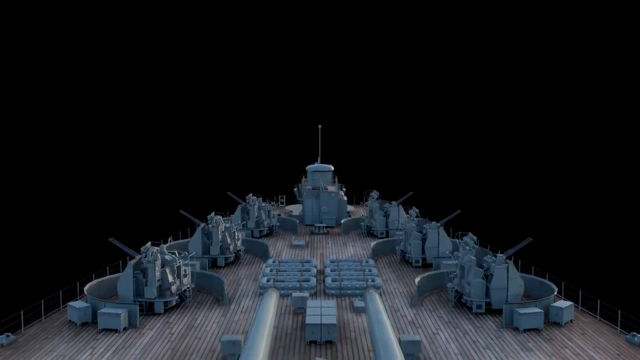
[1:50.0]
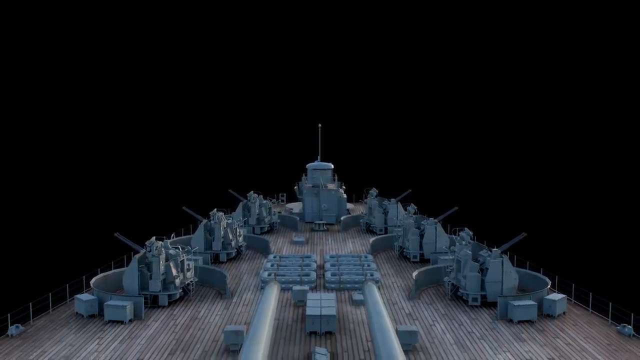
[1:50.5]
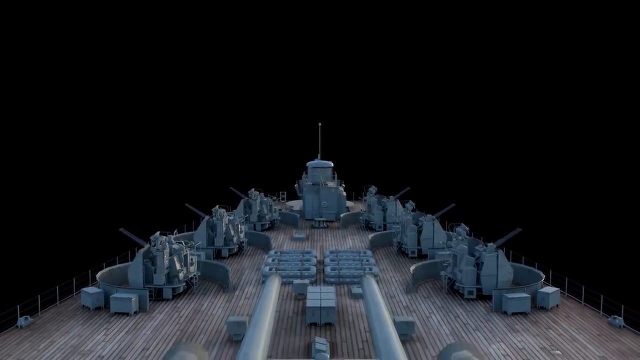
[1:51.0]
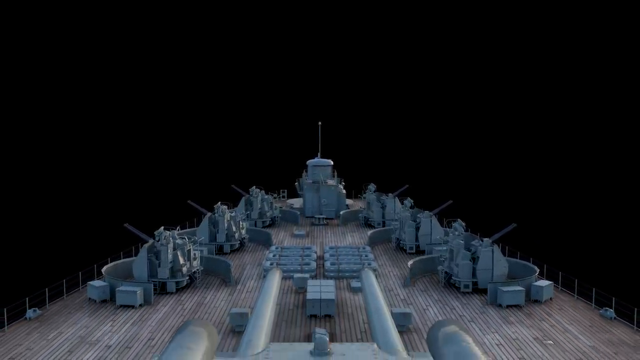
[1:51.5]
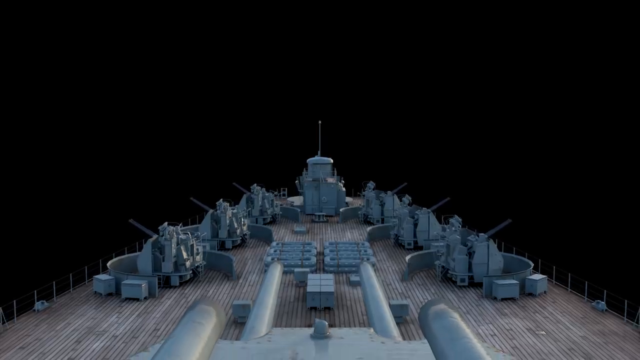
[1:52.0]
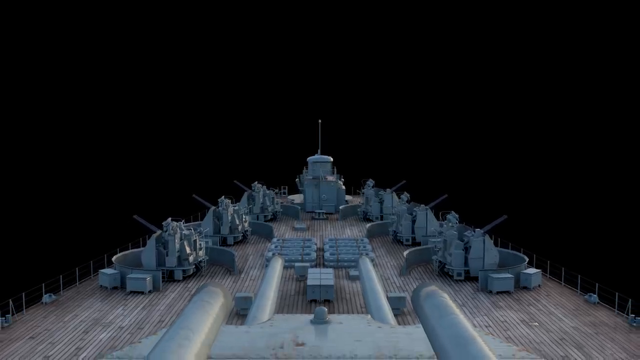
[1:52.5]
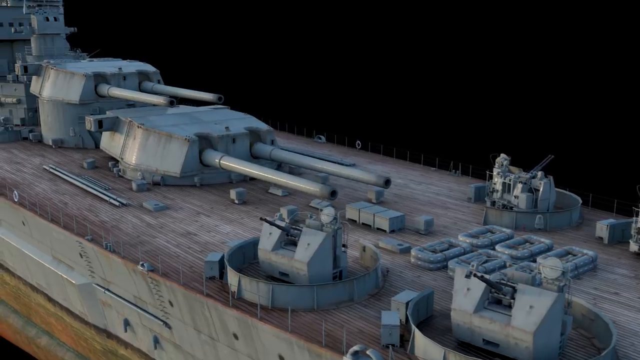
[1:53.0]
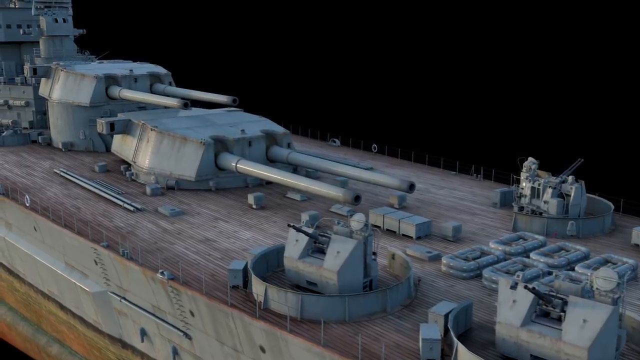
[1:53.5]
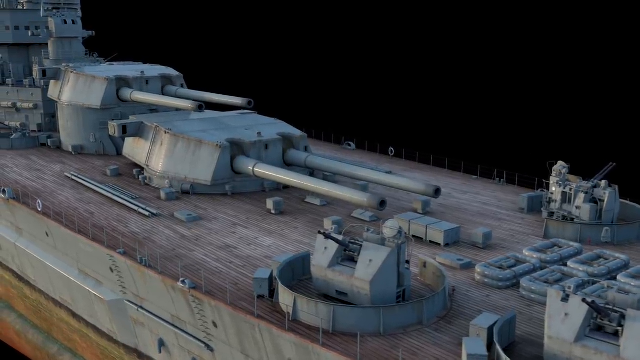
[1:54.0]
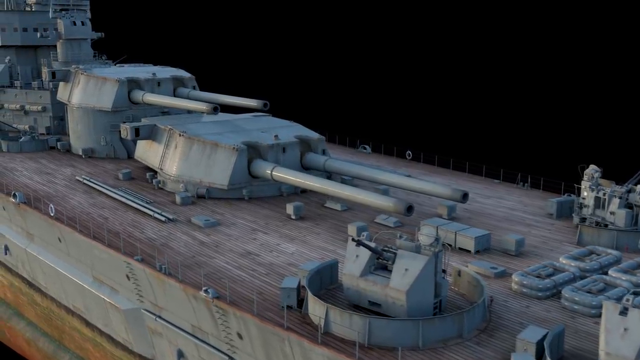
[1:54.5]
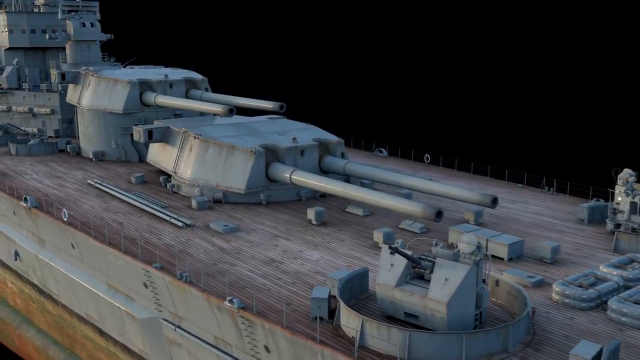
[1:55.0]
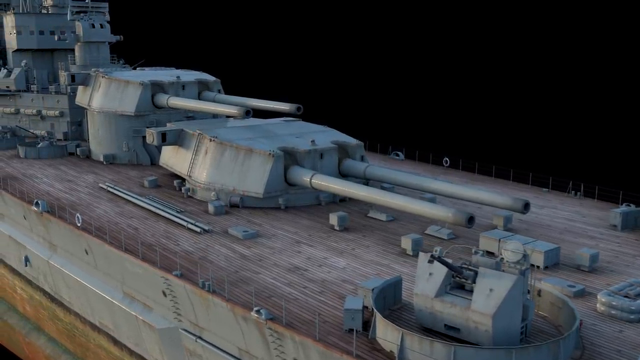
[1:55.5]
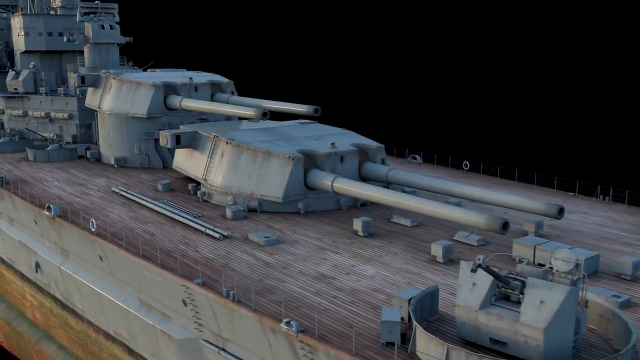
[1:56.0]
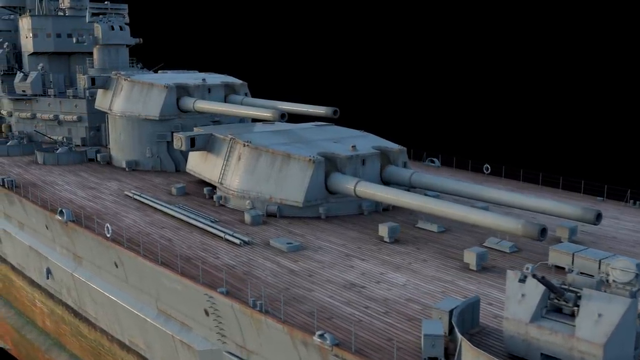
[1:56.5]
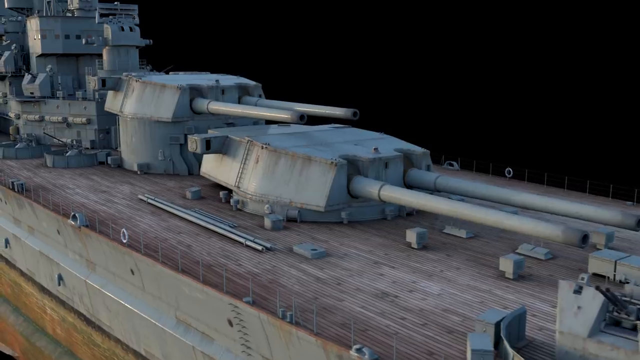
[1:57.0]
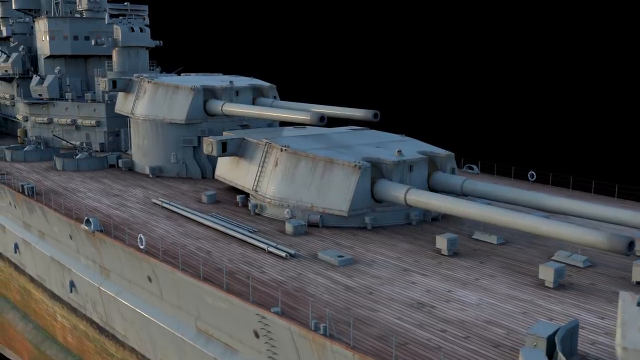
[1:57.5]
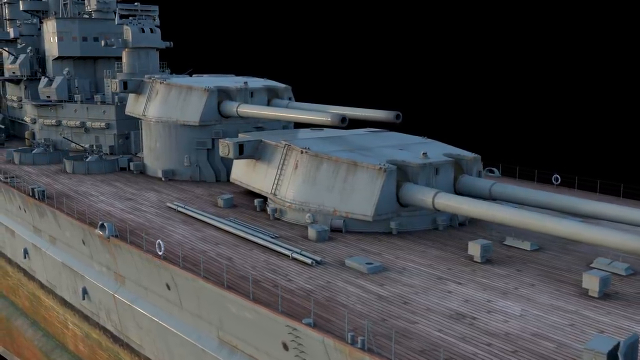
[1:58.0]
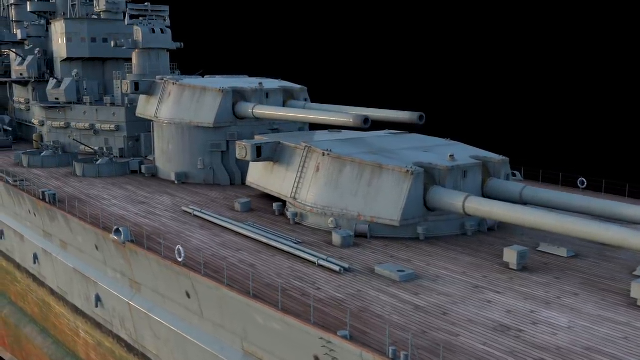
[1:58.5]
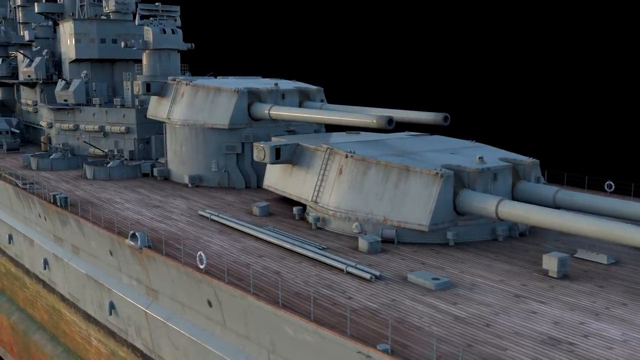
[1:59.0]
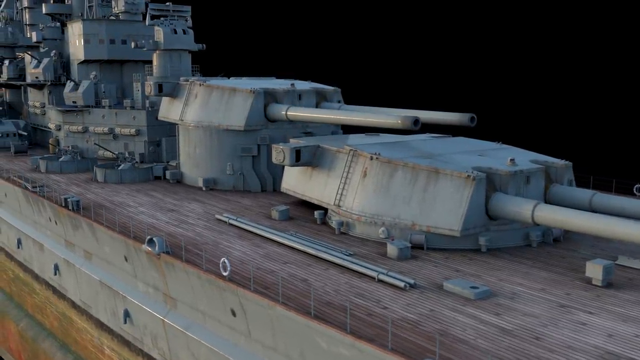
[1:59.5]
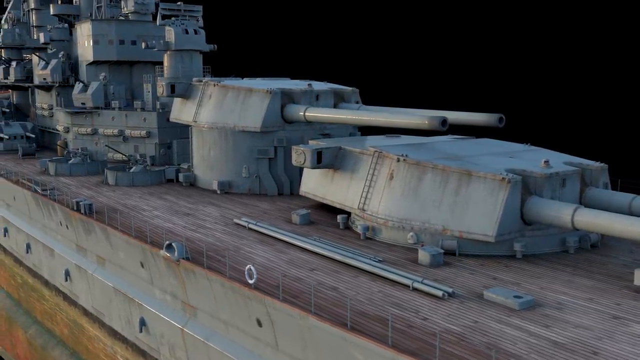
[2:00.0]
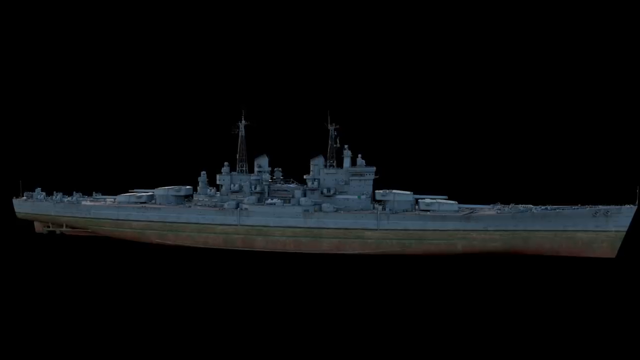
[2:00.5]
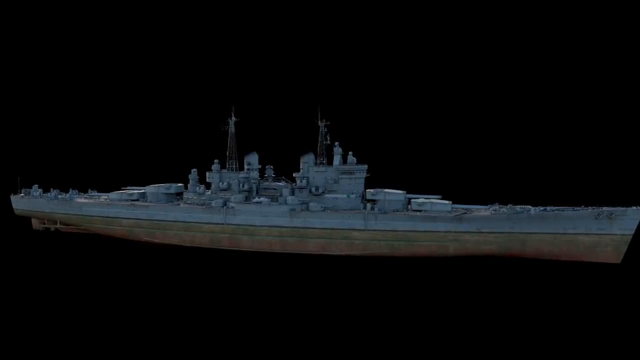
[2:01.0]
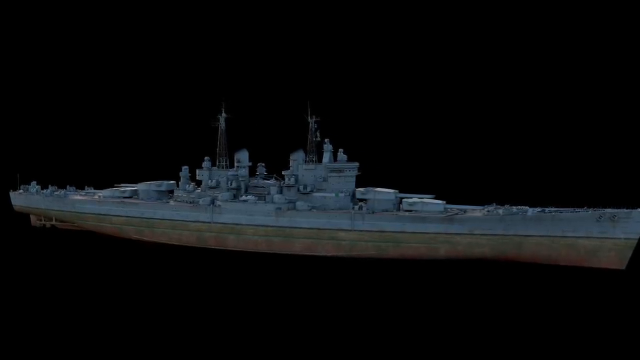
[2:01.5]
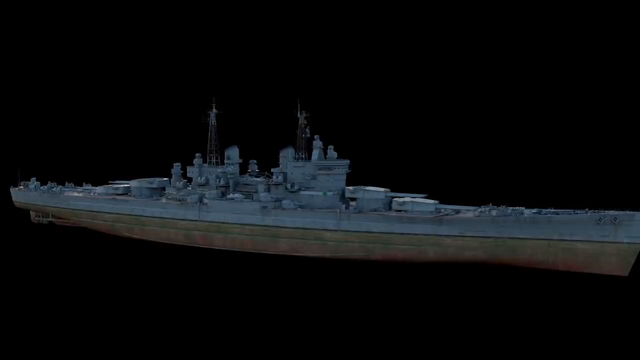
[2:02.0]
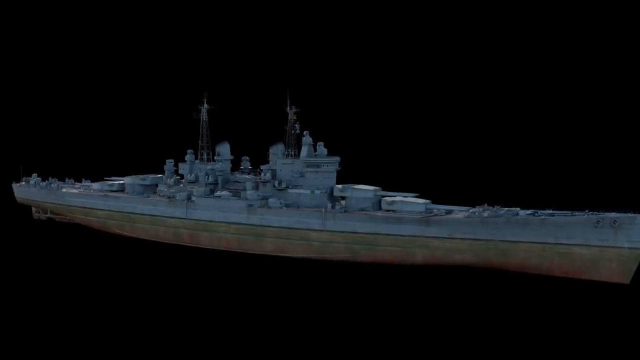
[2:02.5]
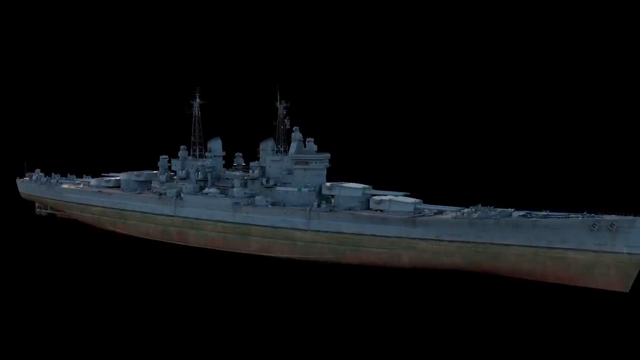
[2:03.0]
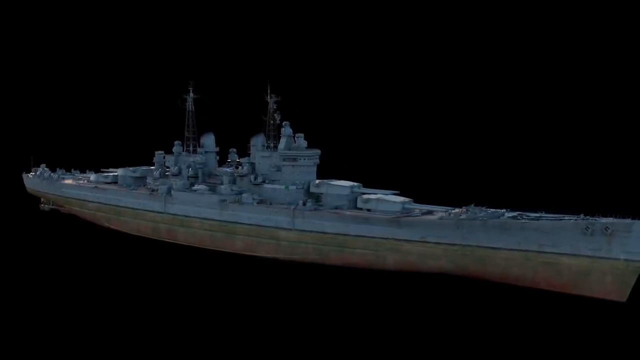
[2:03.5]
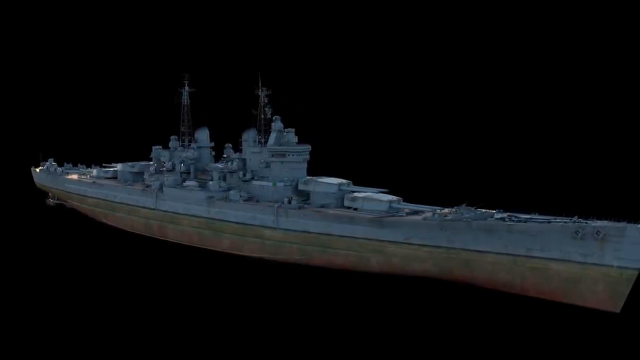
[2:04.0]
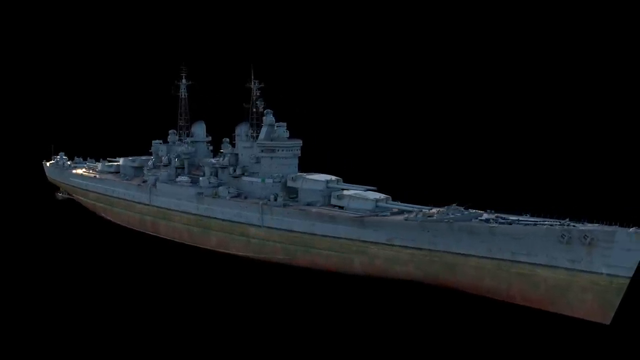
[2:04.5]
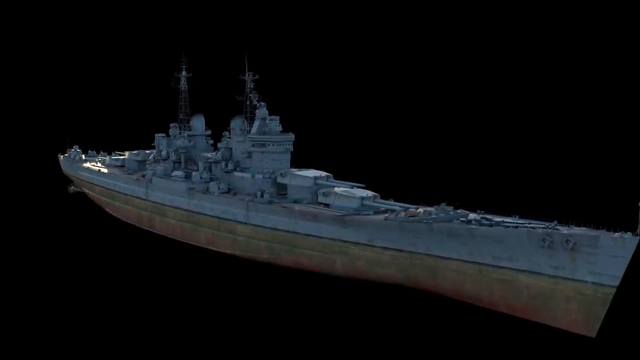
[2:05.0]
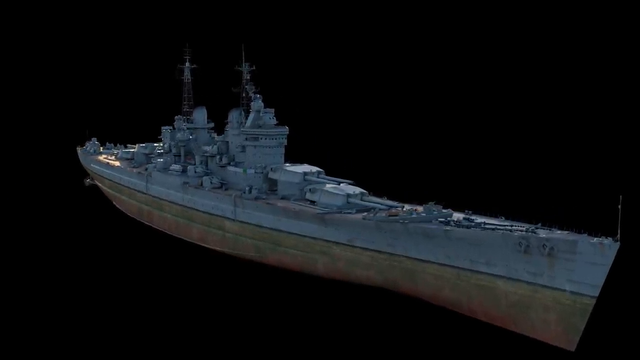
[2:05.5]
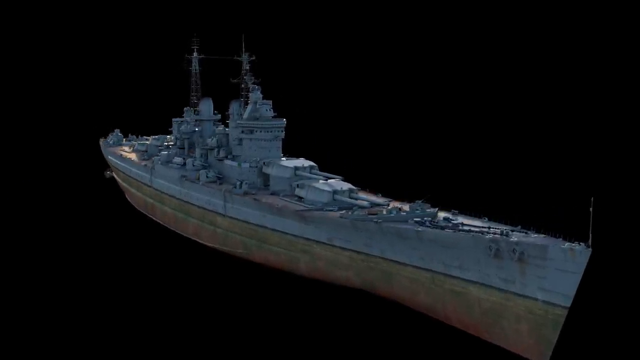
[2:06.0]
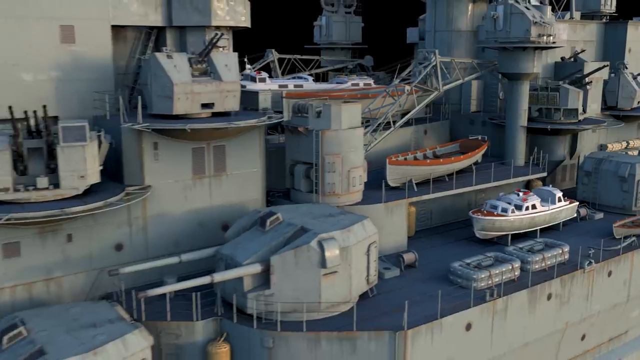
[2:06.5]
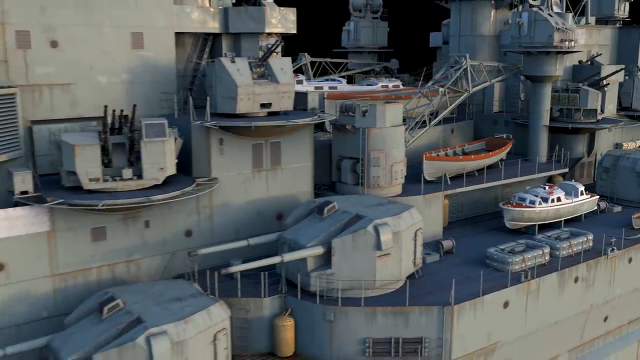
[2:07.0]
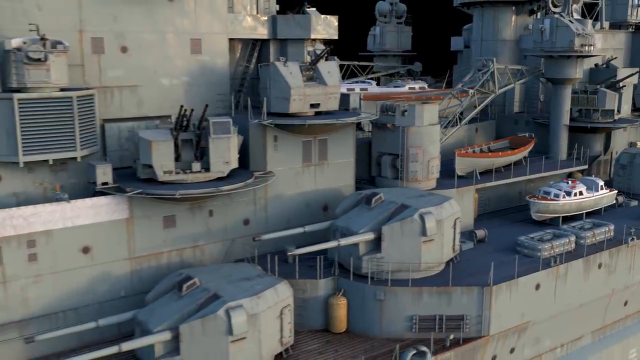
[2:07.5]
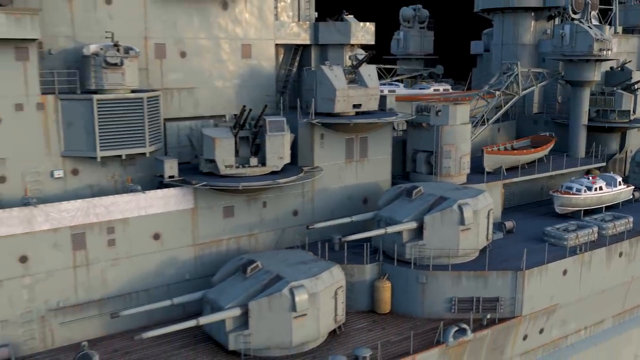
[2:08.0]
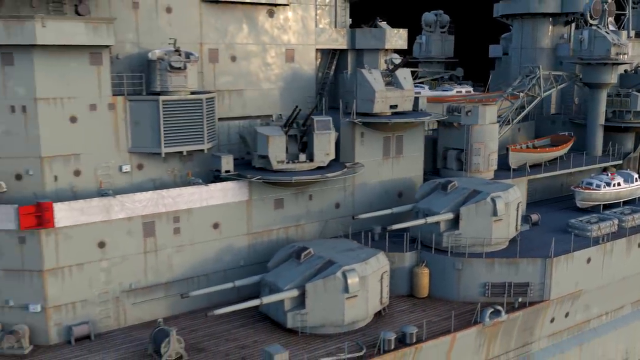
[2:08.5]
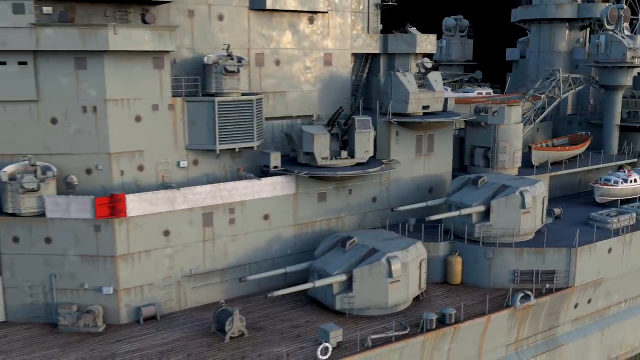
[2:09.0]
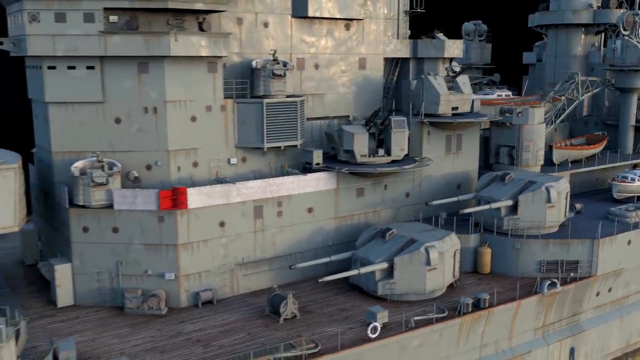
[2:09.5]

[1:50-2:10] The CGI rendering of the warship starts close up at the very top of the middle of the ship, where the large gun barrels are visible. It then changes to a side view of the entire ship, including the bottom, against a black background. Next it switches to a detailed section of the ship showing life rafts, cranes, storage containers and sections of the tanks, which all appear weathered. One of the lifeboats is white with orange on it, and there is a rowboat that is white with orange trim. The CGI pans slowly around through the sides and shows details of different parts of the ship. When it pans back to the entire ship, the ship slides to the left so that another side of it can be viewed in detail.